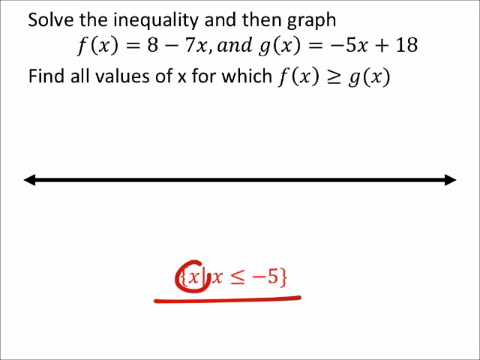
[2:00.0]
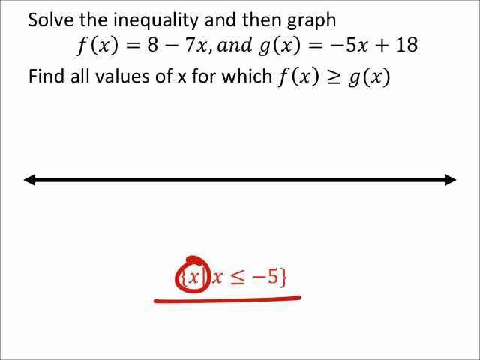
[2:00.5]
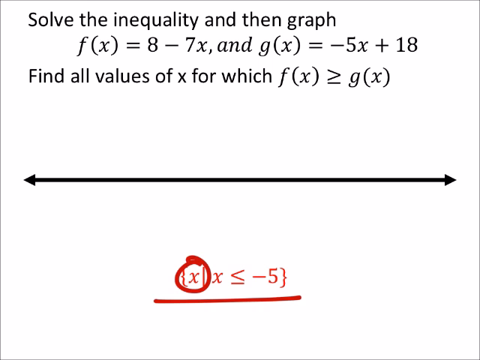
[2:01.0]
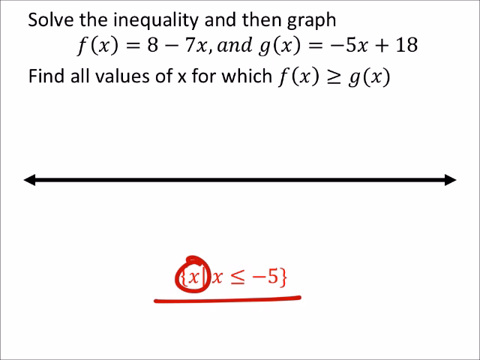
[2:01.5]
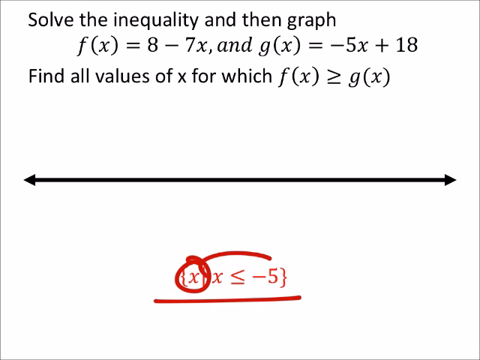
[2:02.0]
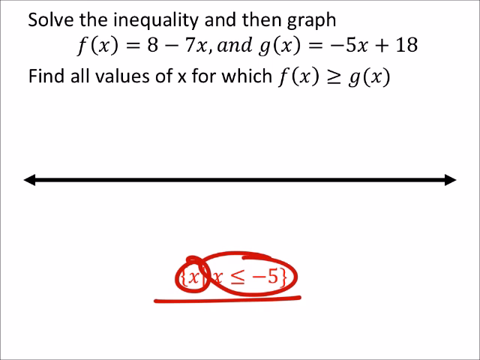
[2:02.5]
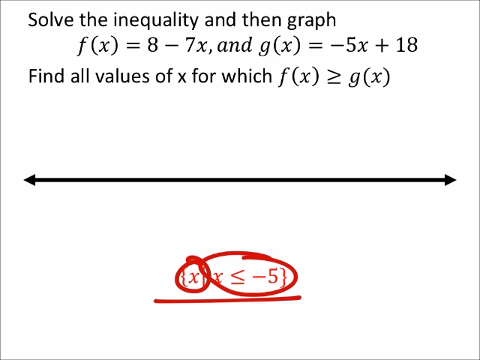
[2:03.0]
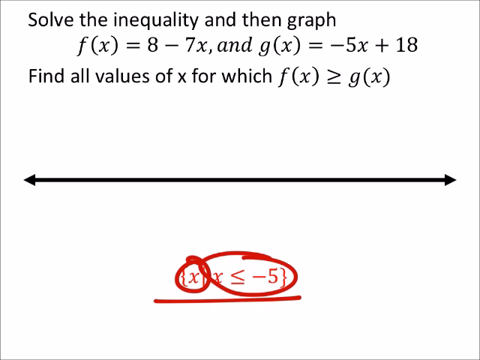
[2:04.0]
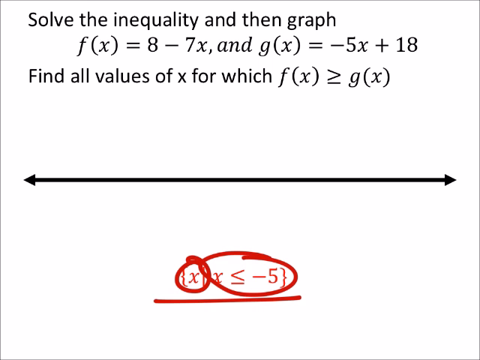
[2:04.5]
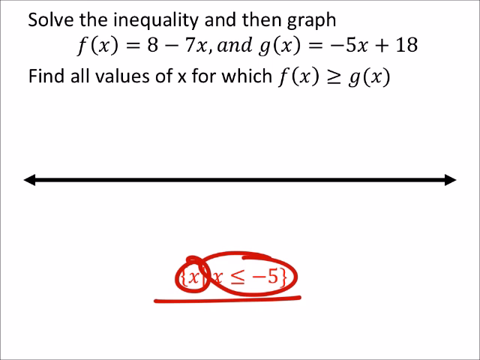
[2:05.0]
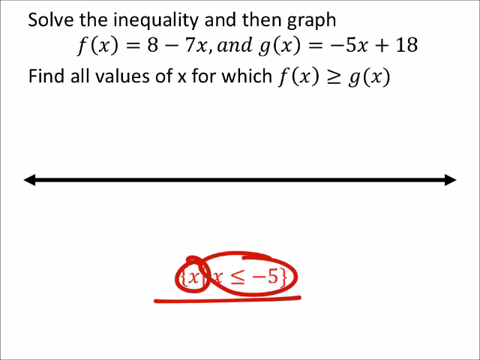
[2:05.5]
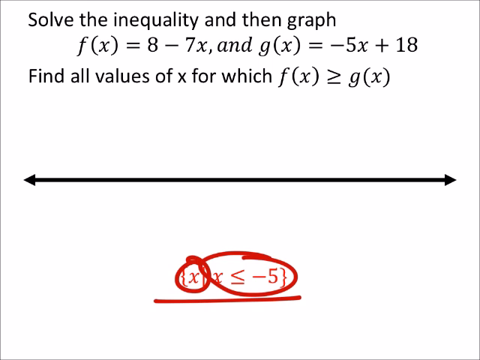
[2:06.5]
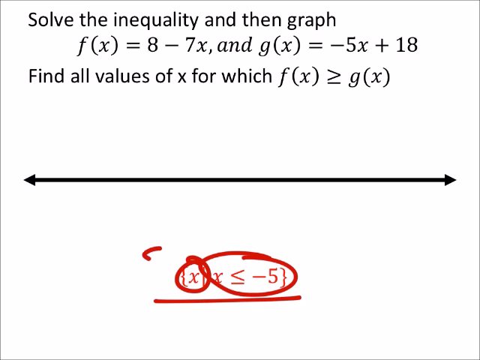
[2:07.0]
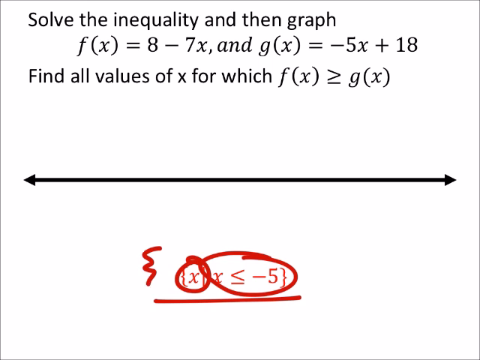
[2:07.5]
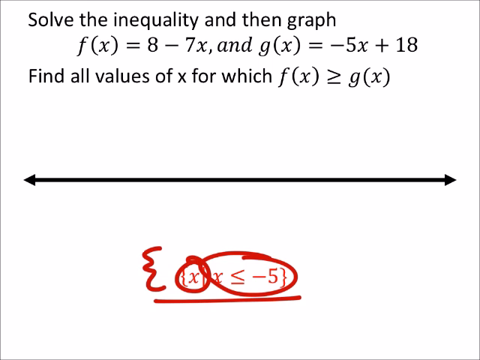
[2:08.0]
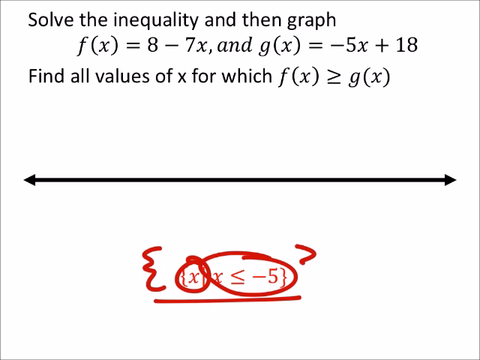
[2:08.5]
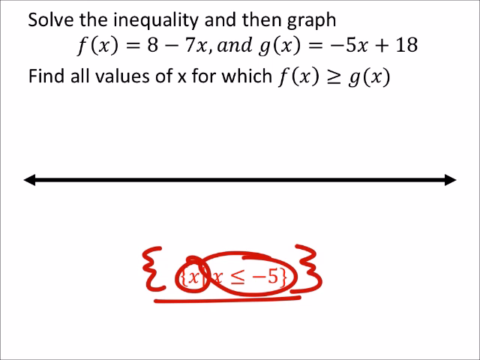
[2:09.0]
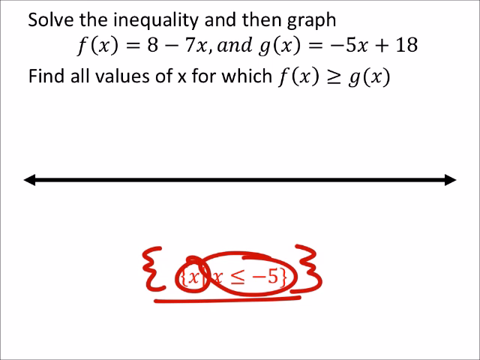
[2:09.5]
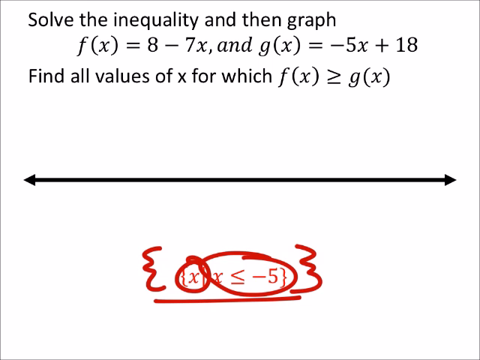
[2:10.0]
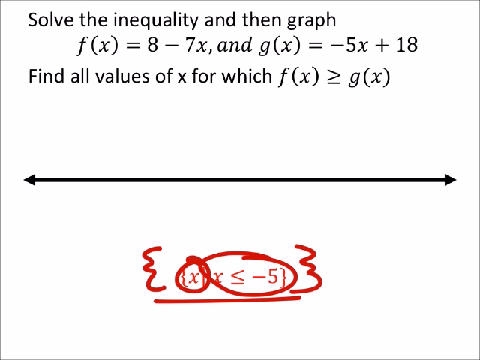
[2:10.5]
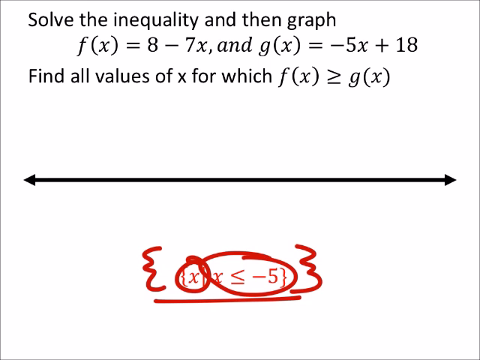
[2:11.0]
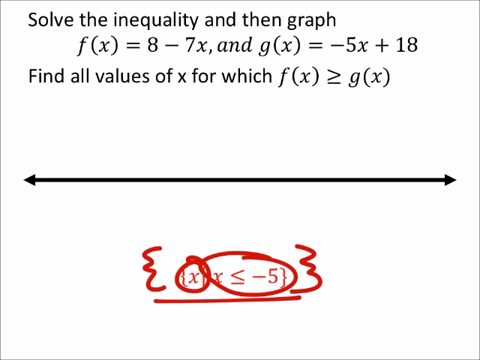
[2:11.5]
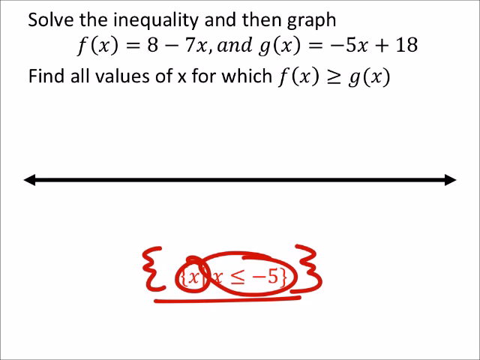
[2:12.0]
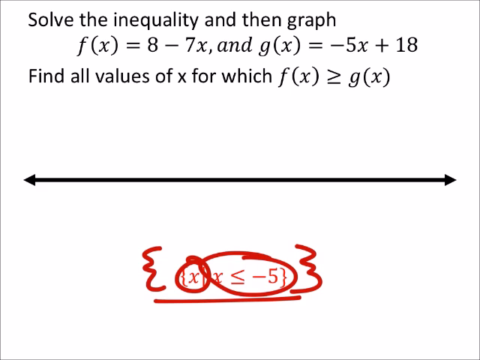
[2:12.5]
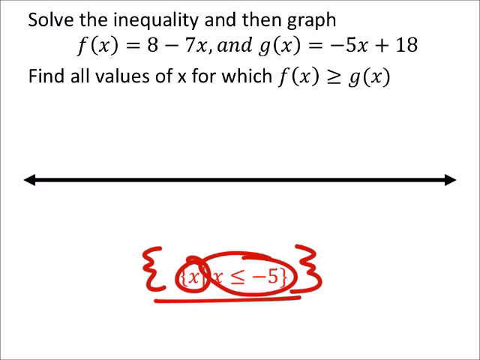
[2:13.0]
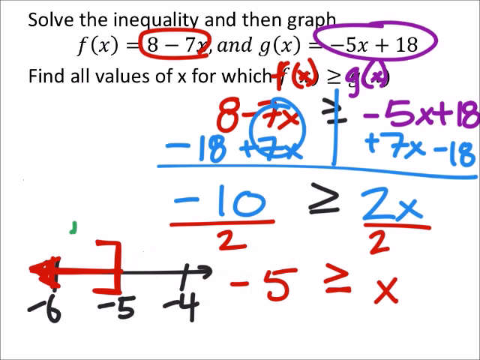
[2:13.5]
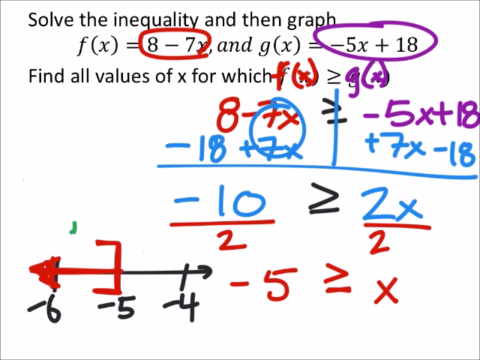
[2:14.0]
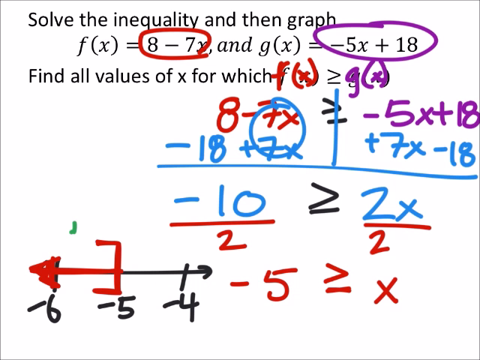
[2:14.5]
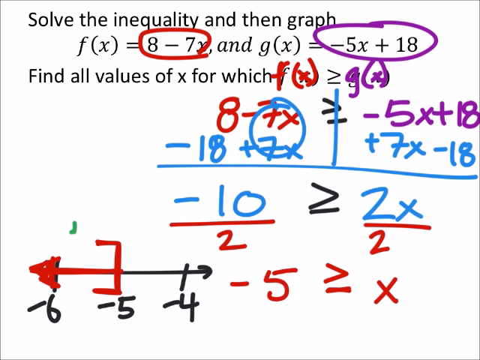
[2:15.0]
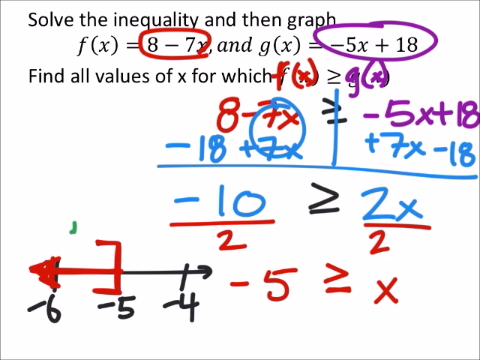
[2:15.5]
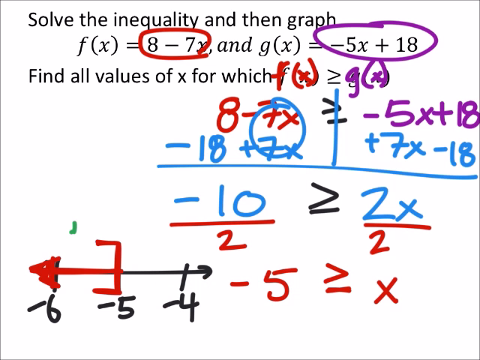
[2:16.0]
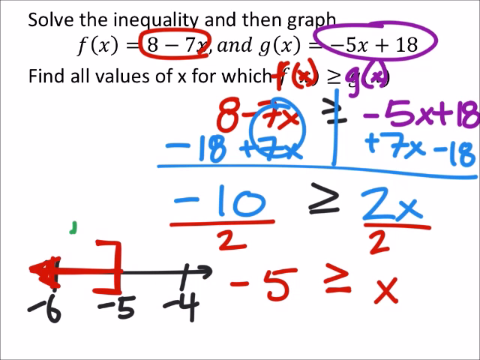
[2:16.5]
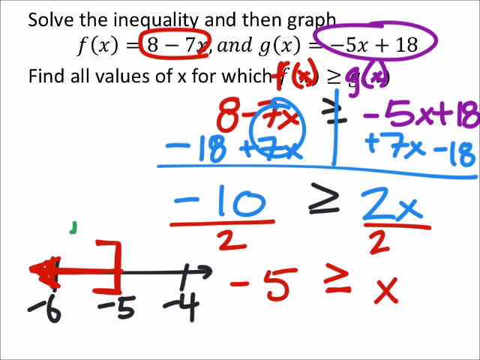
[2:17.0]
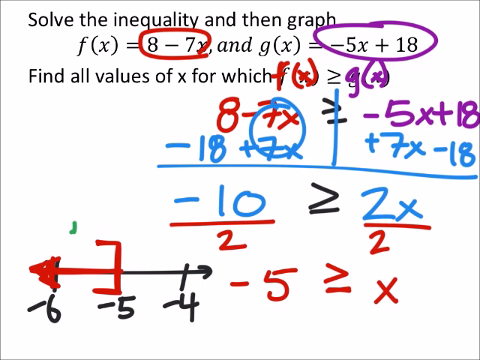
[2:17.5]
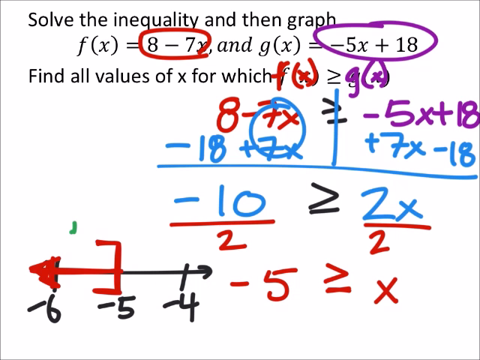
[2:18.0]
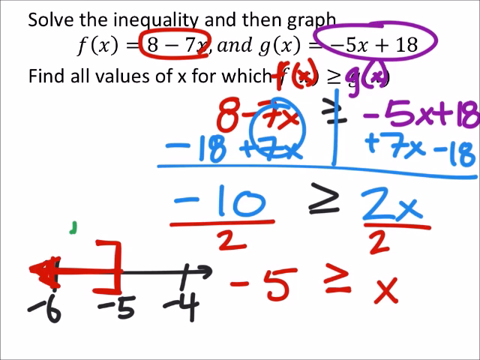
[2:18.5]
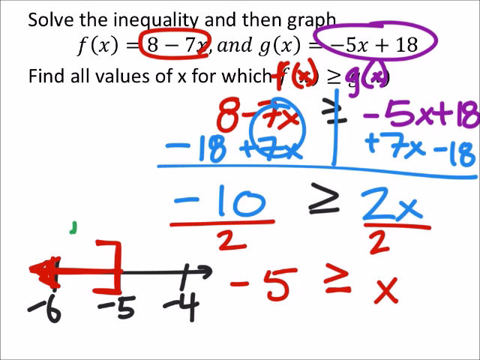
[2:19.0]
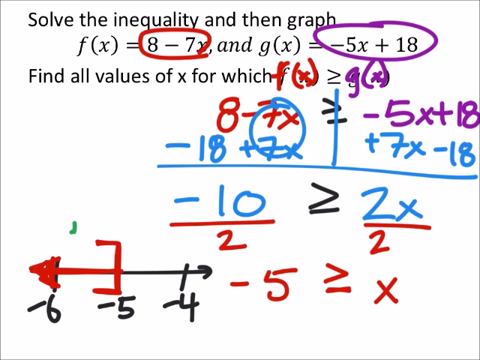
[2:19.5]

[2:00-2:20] The X in the left part of the red equation at the bottom is circled with the red marker, and the rest of the equation to its right is circled with another red circle in a very smooth motion. Two squiggly brackets are then drawn in red on each side of the equation, enclosing it. The screen then switches back to the earlier markings, showing the red, blue, purple and black markings on top of the original question and equation, and it stays on this screen to the end.